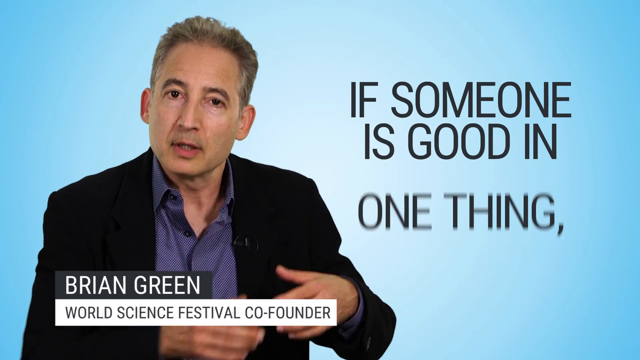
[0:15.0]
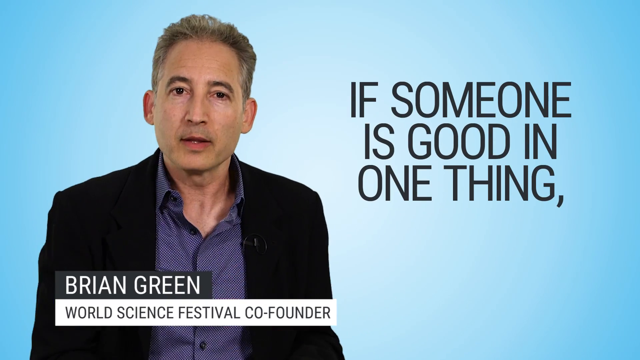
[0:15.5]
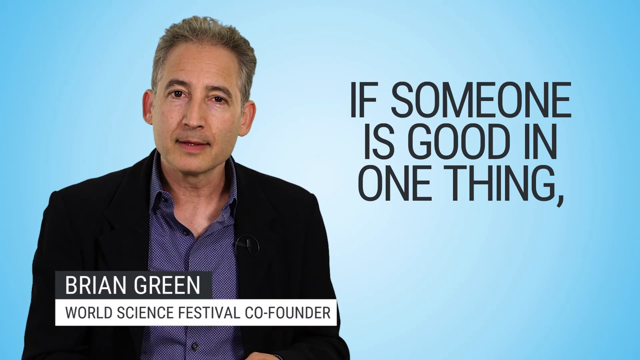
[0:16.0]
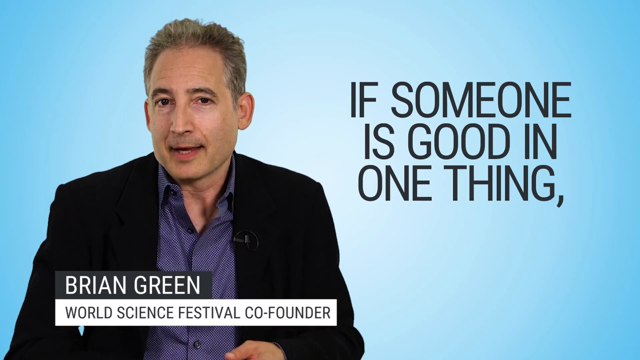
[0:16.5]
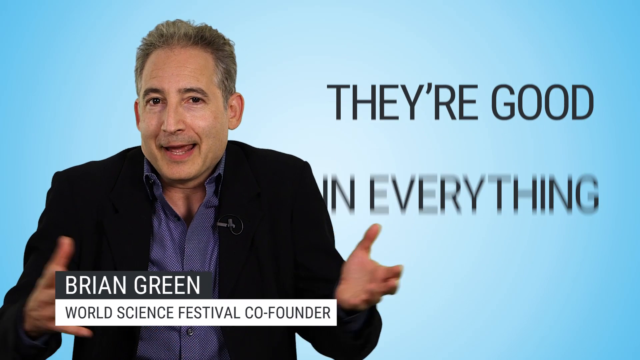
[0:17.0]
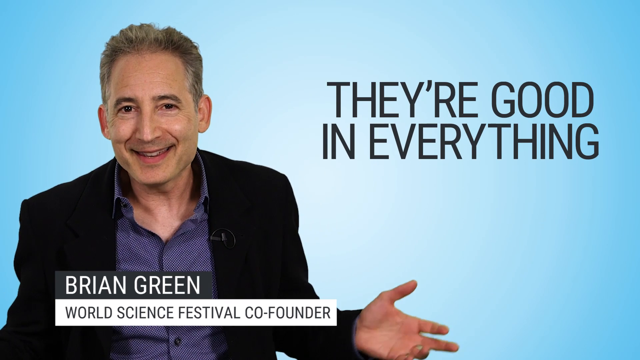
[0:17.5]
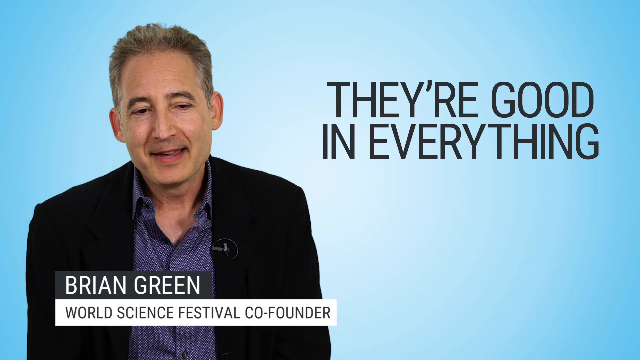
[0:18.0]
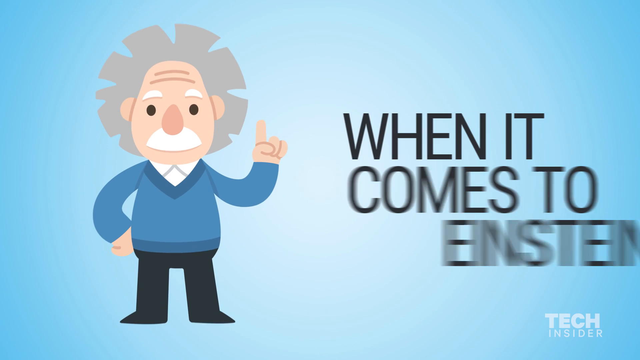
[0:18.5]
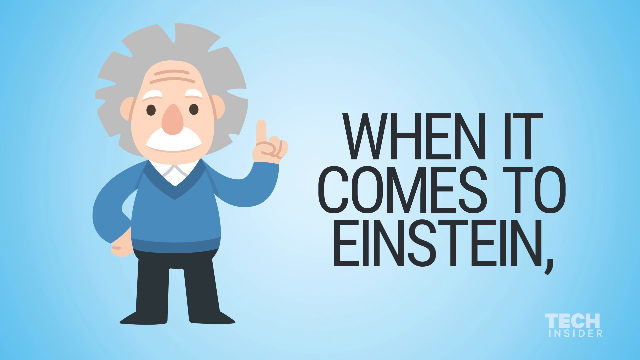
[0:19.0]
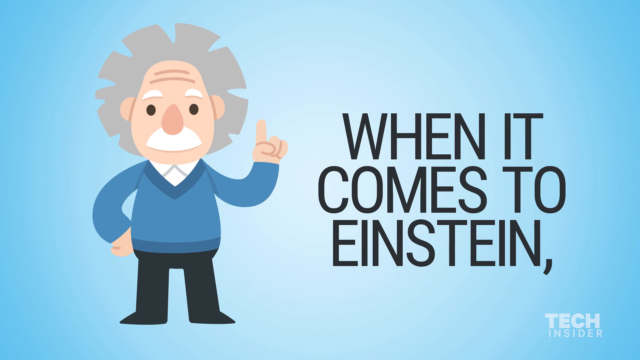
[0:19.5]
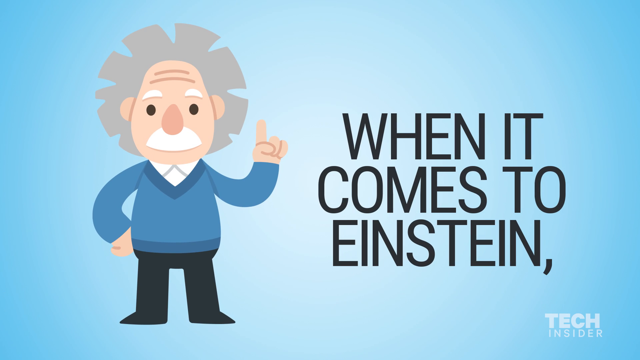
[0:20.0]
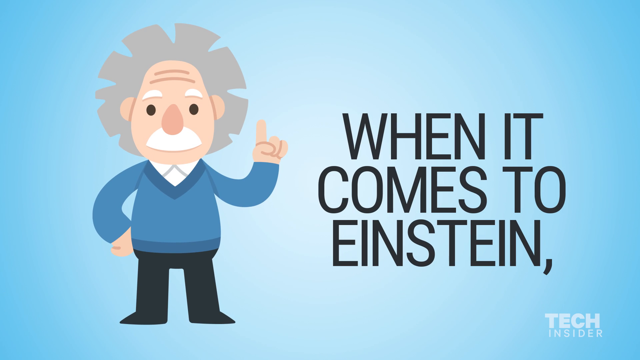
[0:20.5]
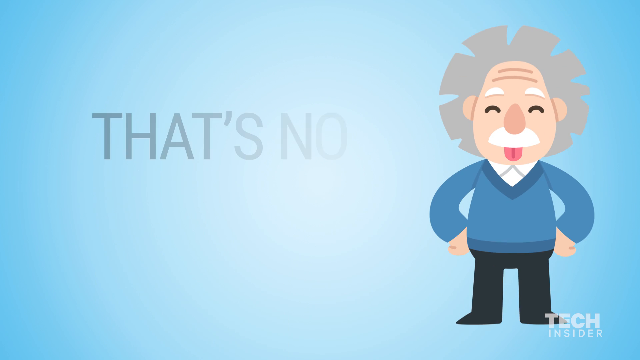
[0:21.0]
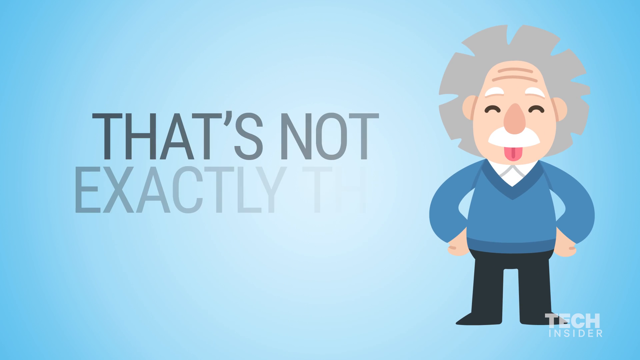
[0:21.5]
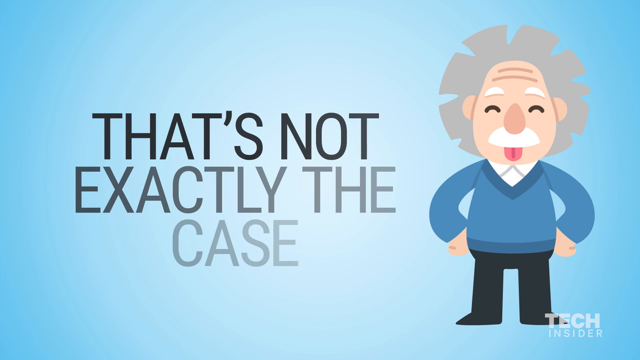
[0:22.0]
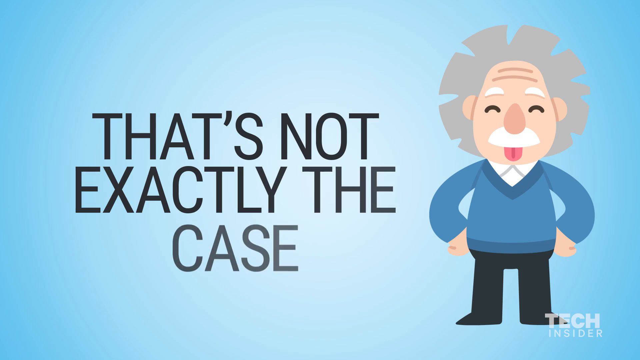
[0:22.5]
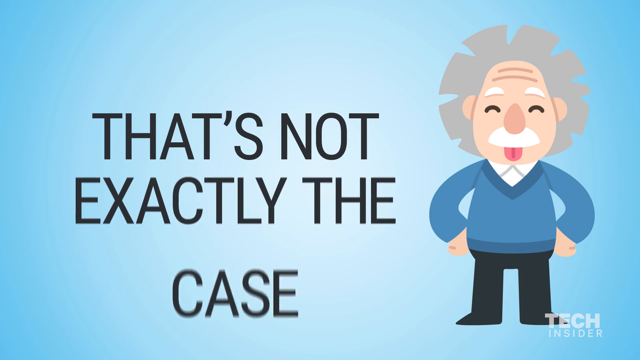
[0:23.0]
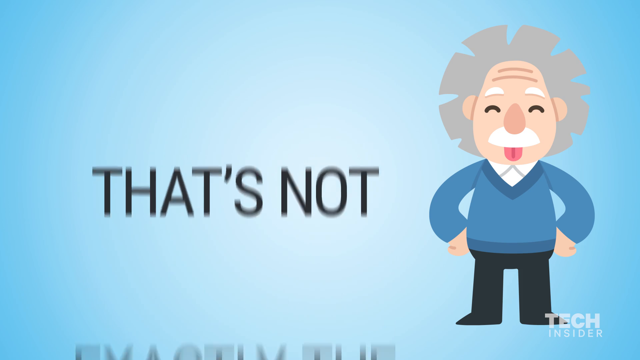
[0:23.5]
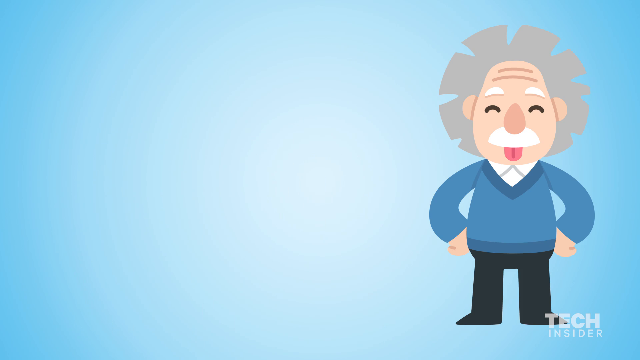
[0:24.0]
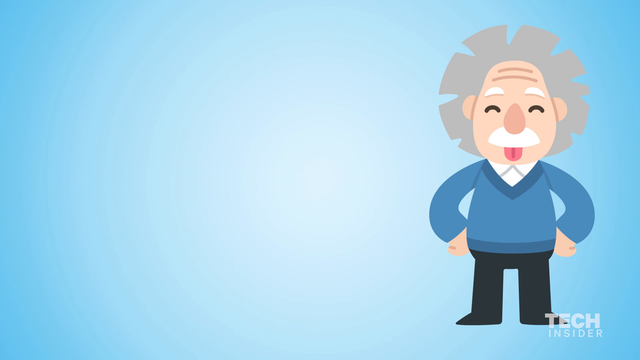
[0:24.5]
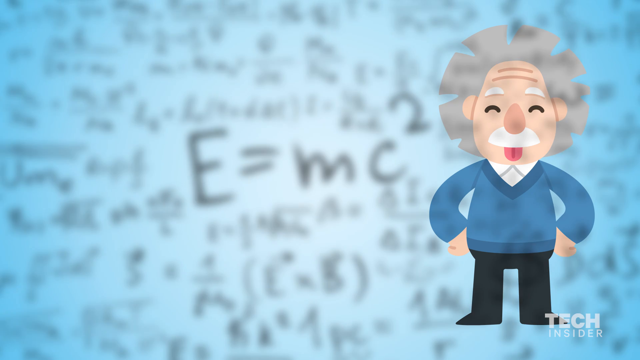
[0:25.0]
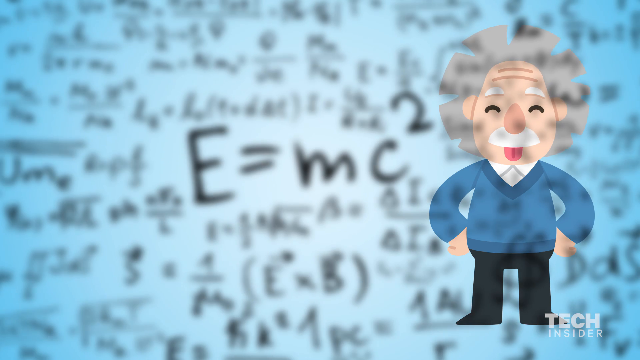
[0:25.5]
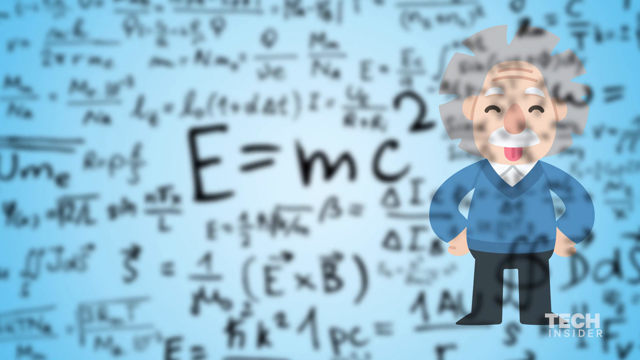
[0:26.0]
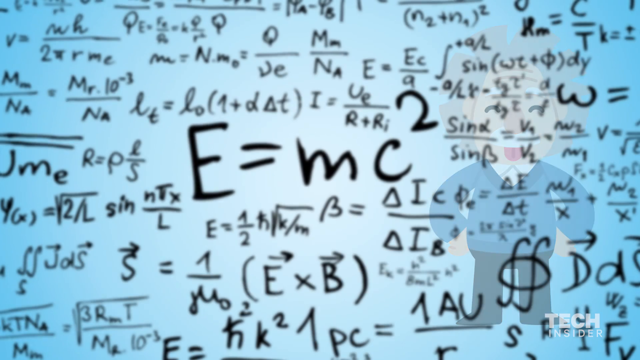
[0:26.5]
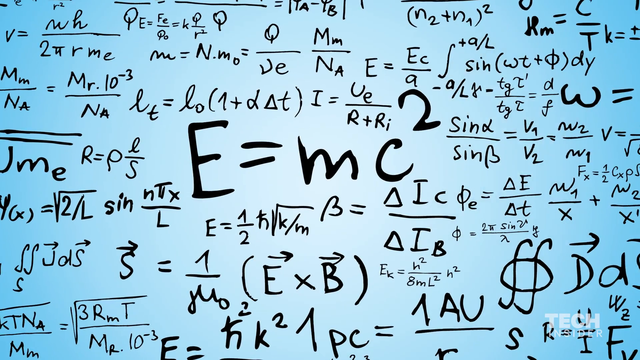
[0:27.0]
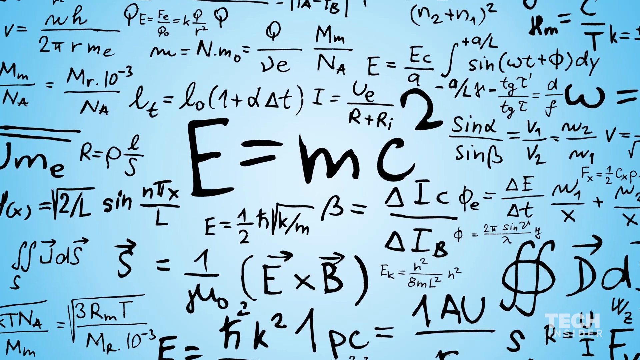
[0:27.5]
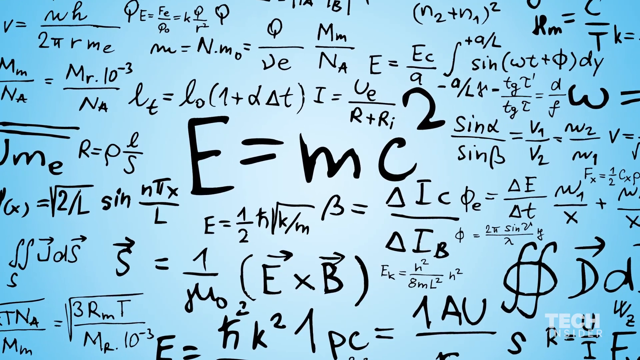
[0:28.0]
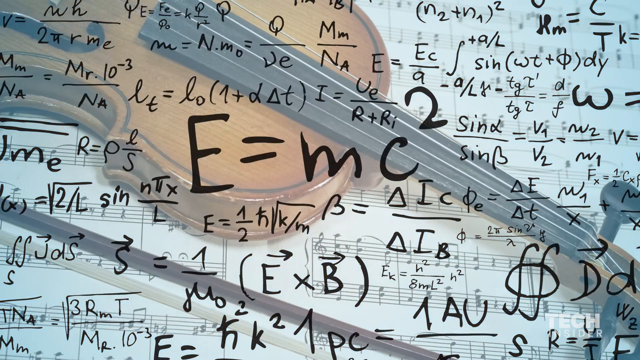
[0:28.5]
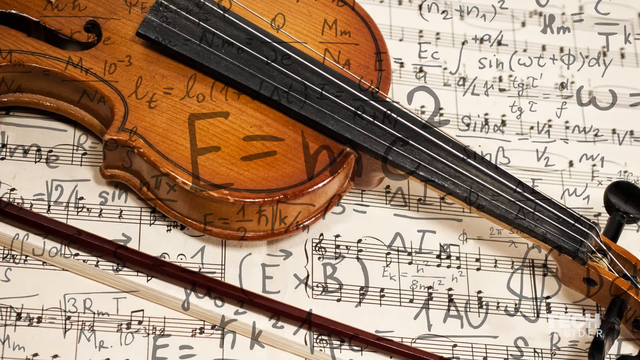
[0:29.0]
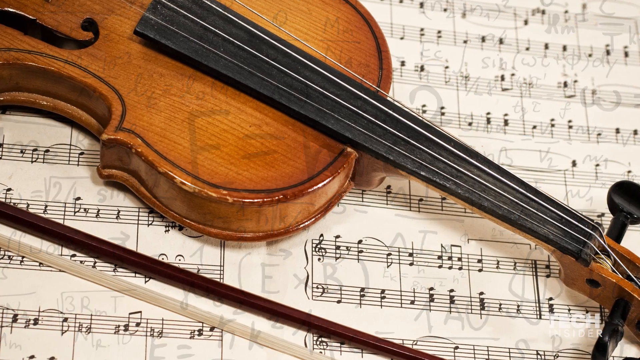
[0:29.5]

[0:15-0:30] The man continues talking. Words appear reading "if someone is good in one thing, they're good in everything," dropping and fading away as they go on. Then text reads "when it comes to Einstein, that's not exactly the case," and Einstein is shown pointing up, then with his hand at his waist and his tongue sticking out. The blue screen follows with "E equals MC squared" and apparently related equations all around it. Then a violin appears, laid over some music notes.